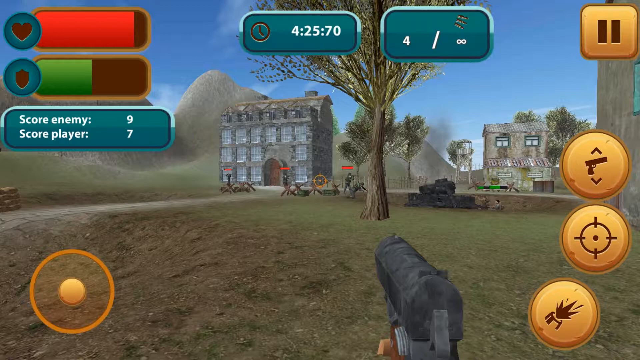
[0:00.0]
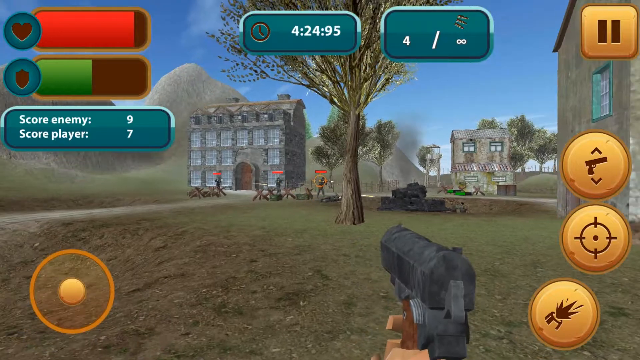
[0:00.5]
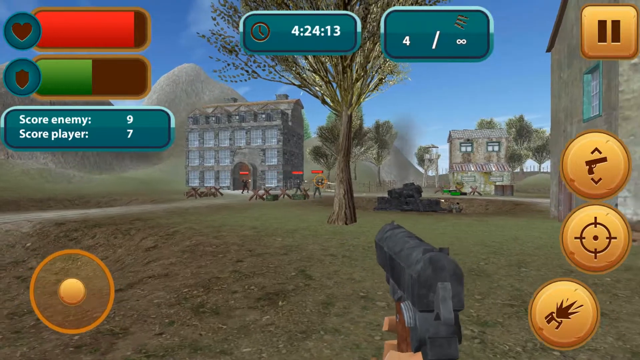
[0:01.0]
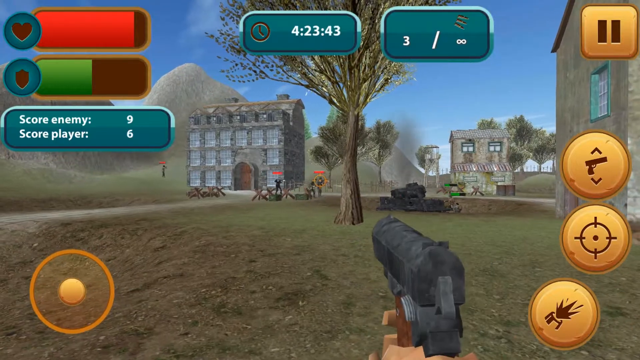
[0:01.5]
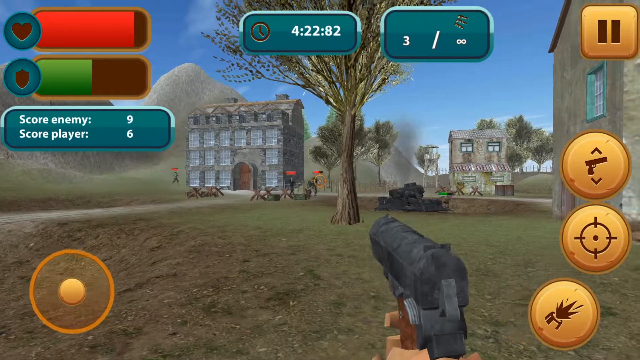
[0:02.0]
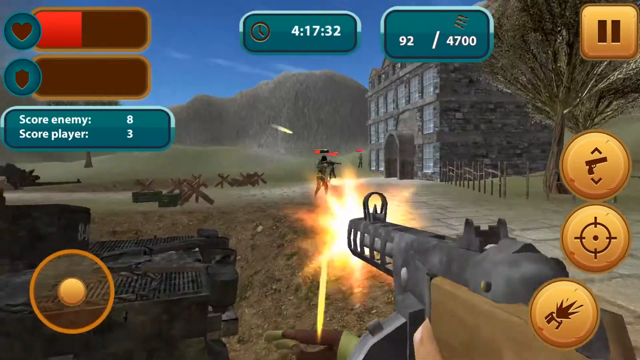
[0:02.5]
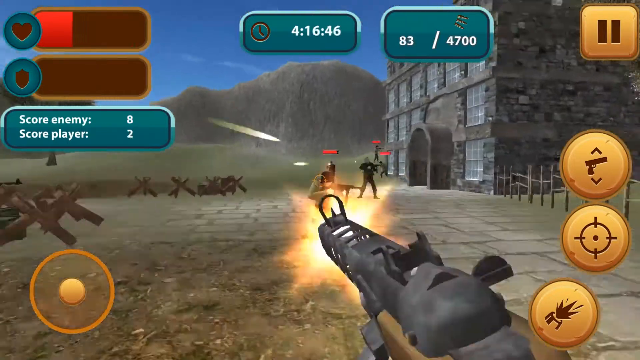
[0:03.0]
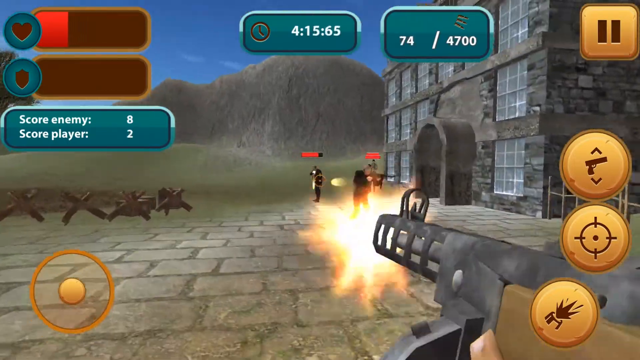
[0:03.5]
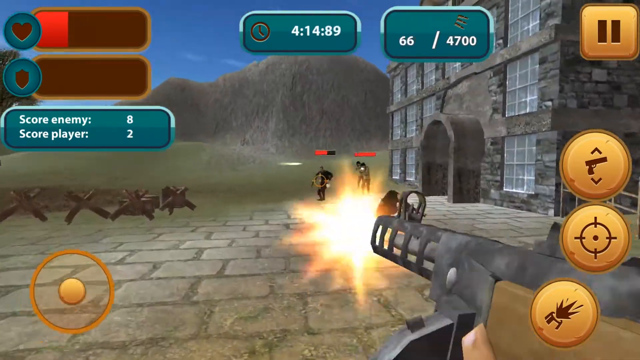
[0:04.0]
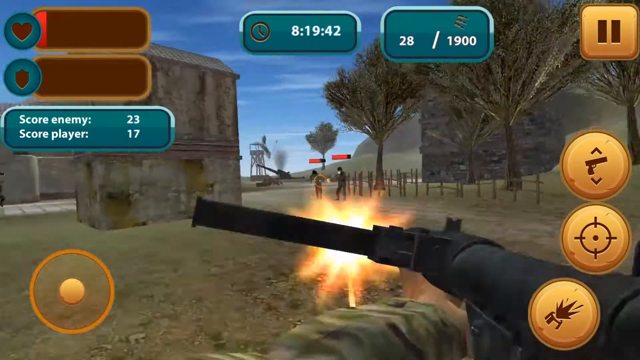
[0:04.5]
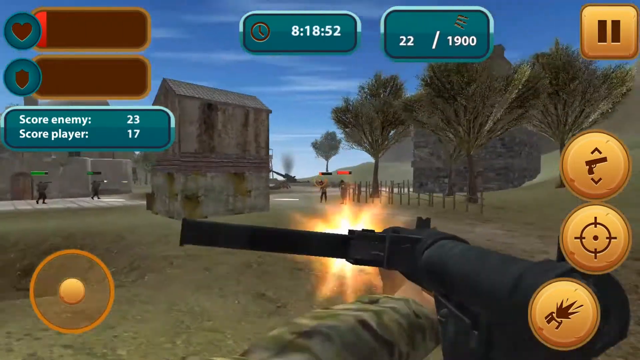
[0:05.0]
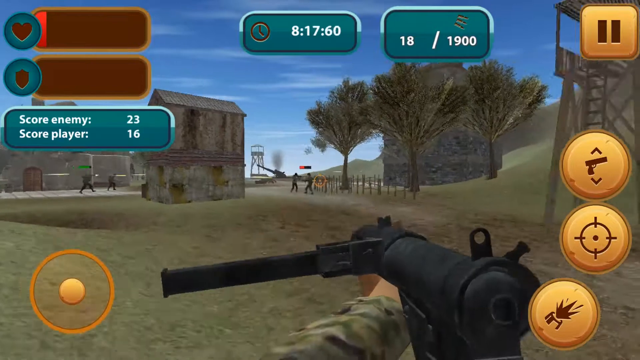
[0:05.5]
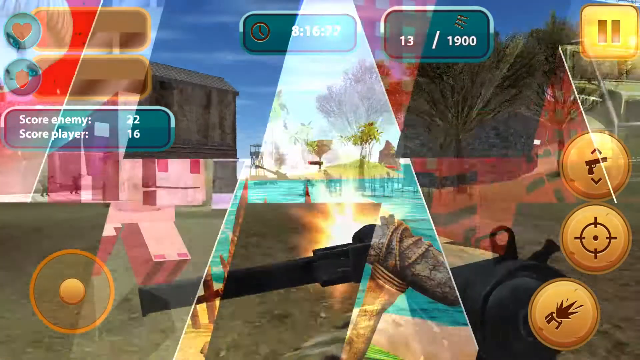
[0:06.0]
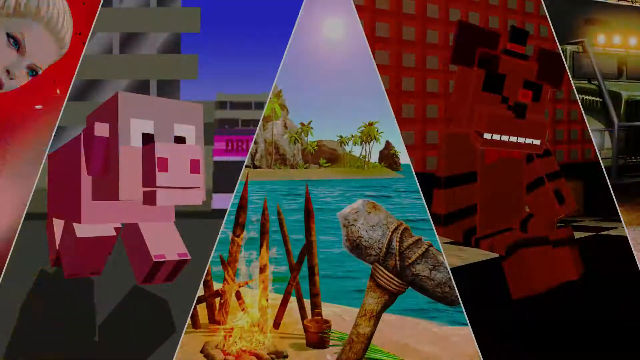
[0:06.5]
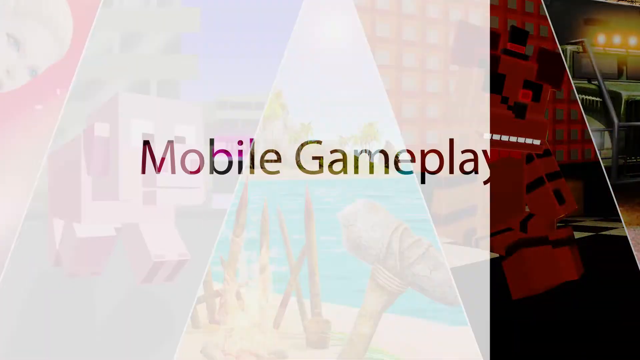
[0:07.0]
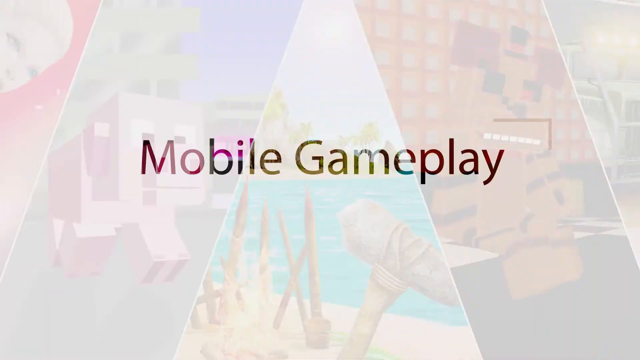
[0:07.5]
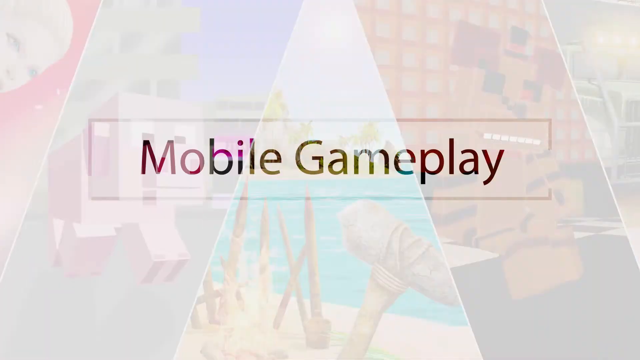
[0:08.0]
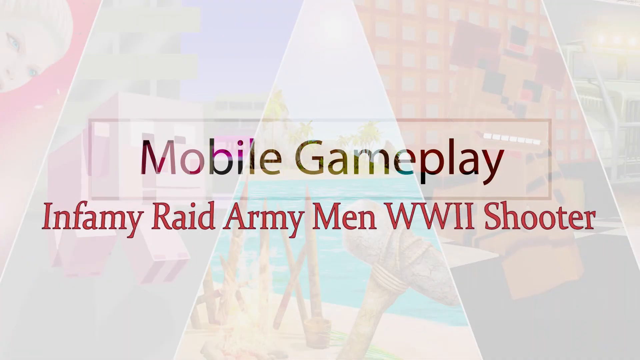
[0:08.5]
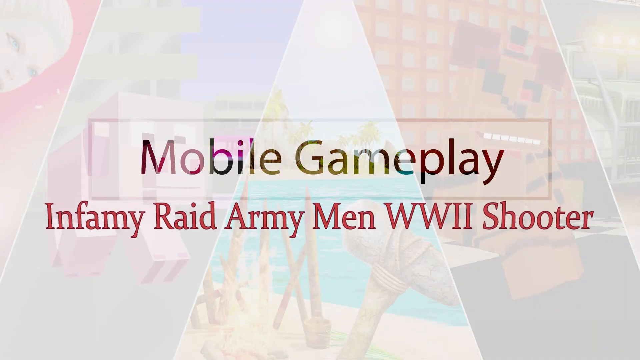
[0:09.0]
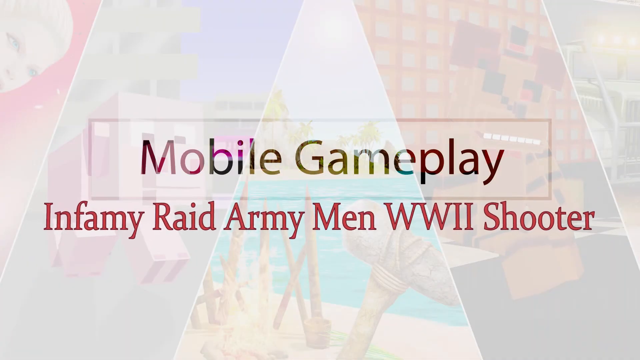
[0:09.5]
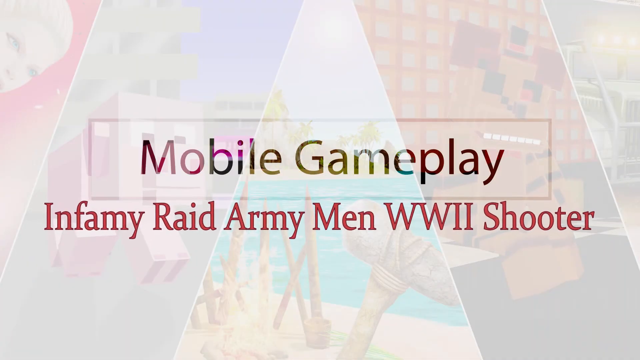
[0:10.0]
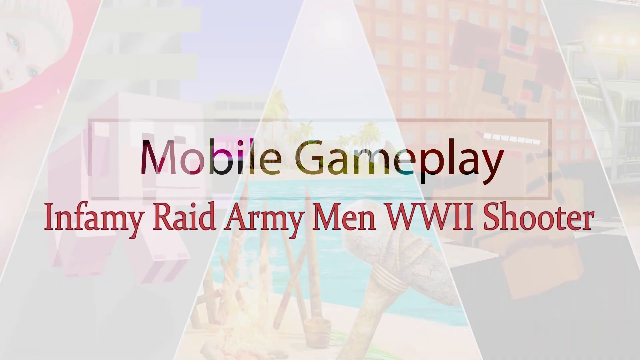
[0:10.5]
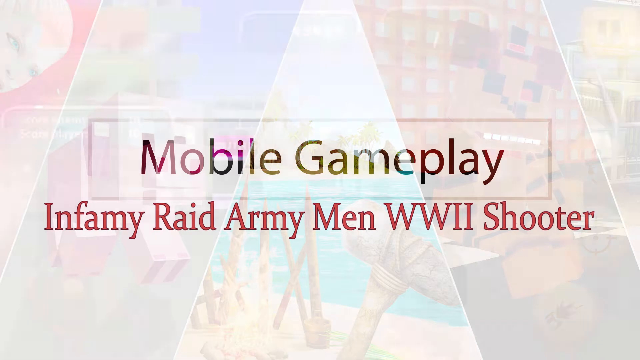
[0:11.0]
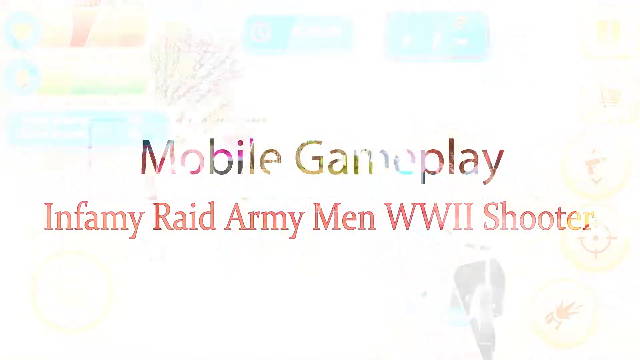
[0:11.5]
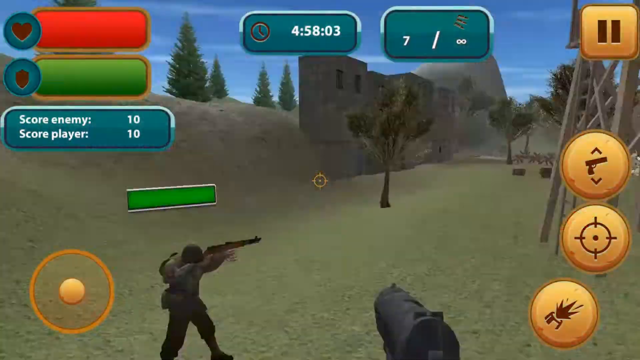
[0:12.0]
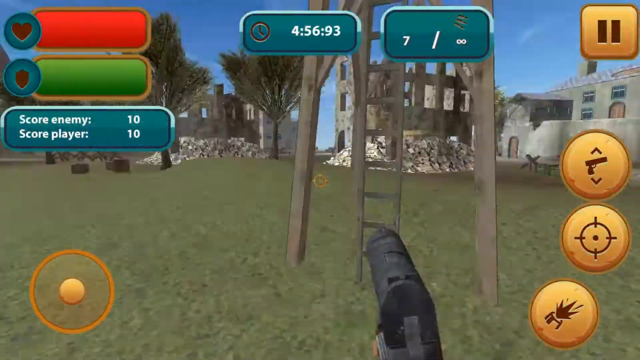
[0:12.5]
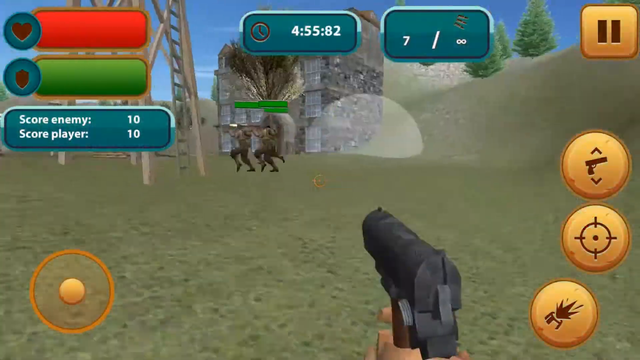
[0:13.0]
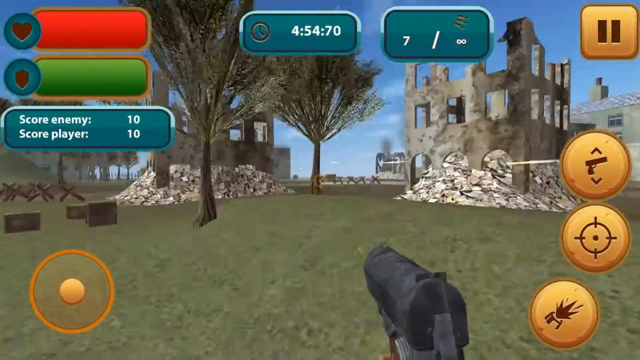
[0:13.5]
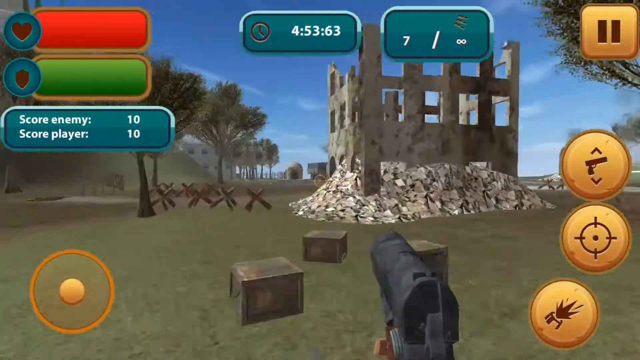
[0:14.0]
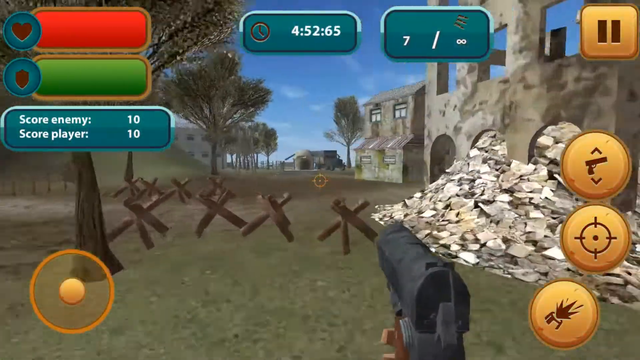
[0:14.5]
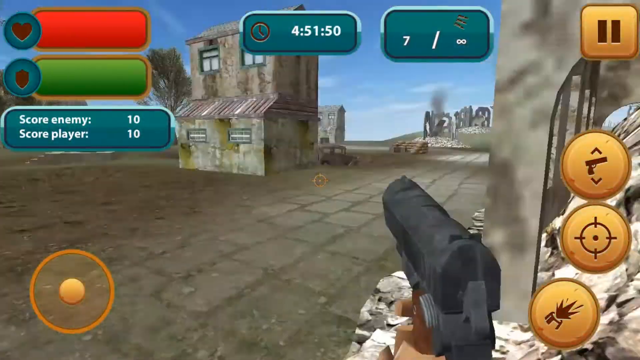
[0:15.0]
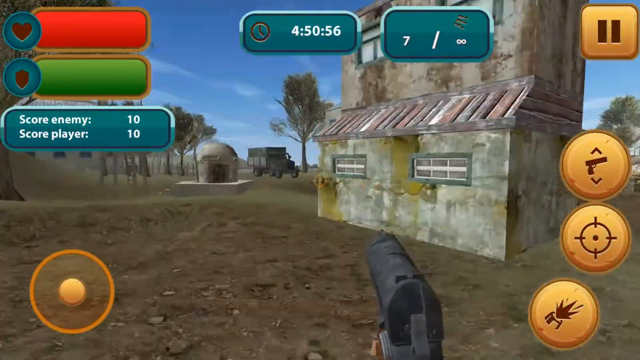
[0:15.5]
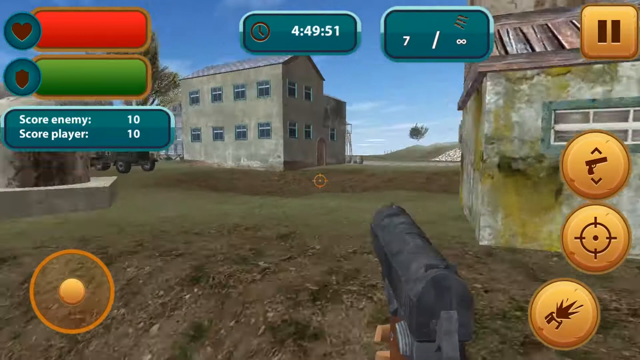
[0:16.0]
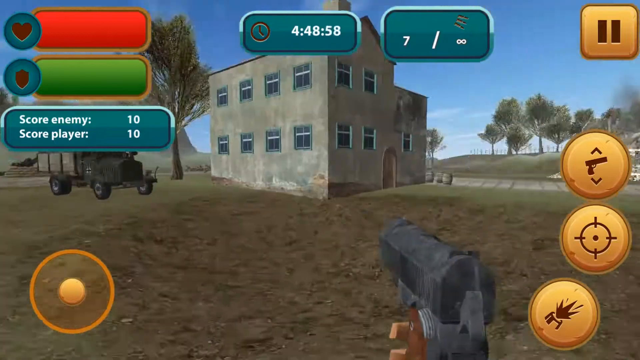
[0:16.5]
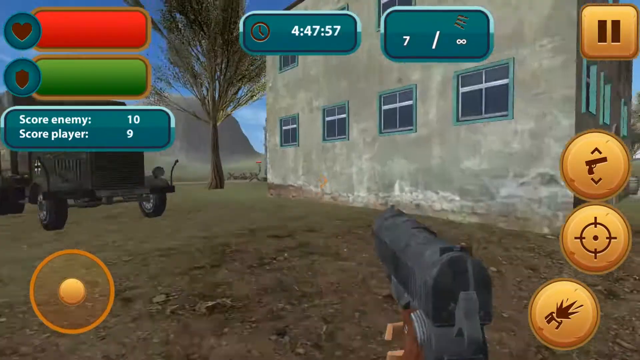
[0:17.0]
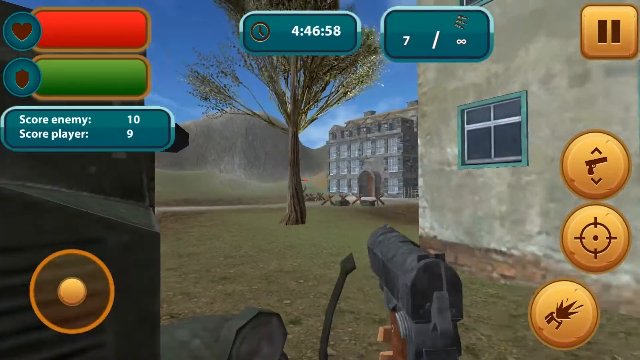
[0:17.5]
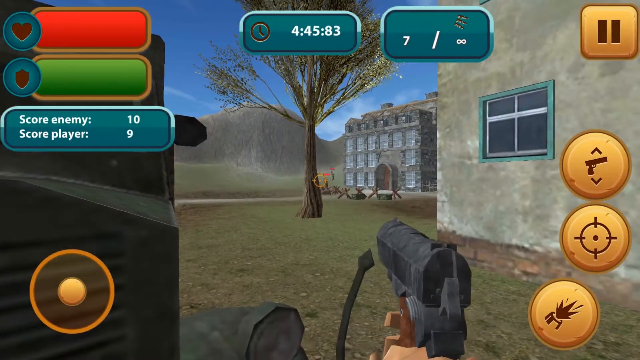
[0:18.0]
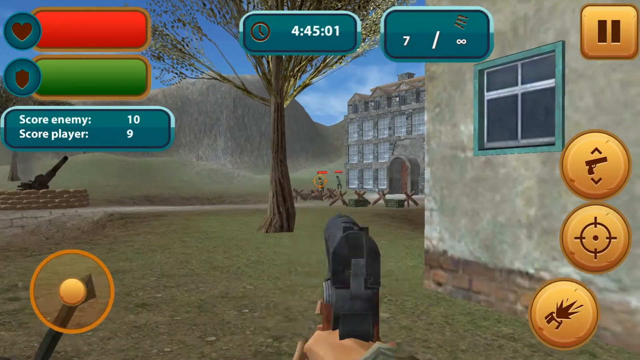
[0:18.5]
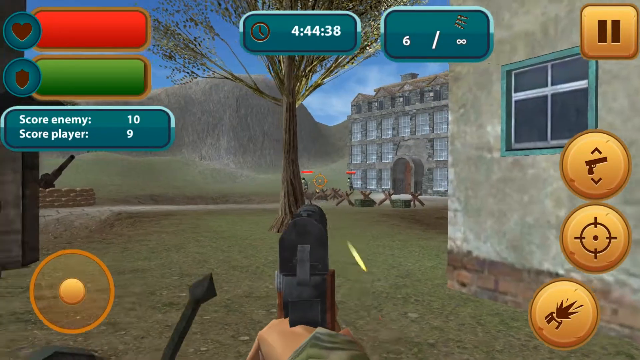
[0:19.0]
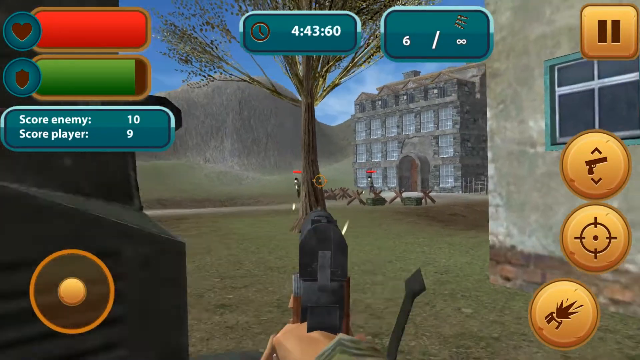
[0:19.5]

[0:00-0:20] The video appears to be a trailer for a mobile World War II-based shooter game with a war theme. The characters appear to be dressed in gear expected for World War II, and they appear to be shooting weapons like a PP-40 or a Grease Gun. There are many degraded buildings, with things like tank traps and sandbags placed all around. On the main screen there appears to be a health bar, a sort of shield function, a scoreboard keeping track of the player's stats, a time limit, an ammo indicator and a pause button. There is also a fire button, what looks like an aiming button in the form of a sort of crosshair, and a switch-weapons button.